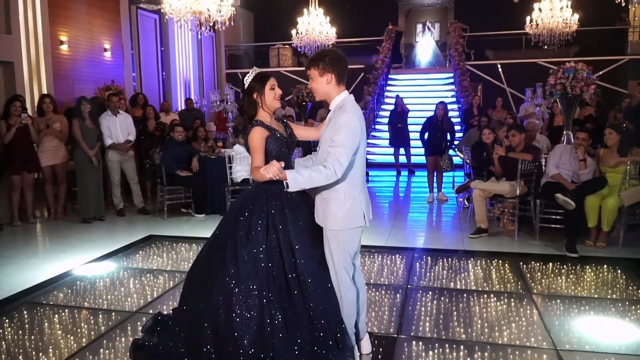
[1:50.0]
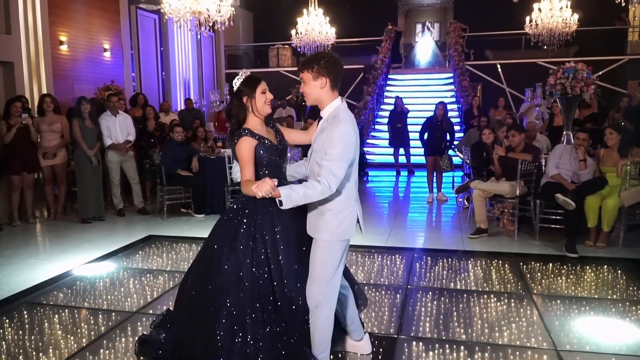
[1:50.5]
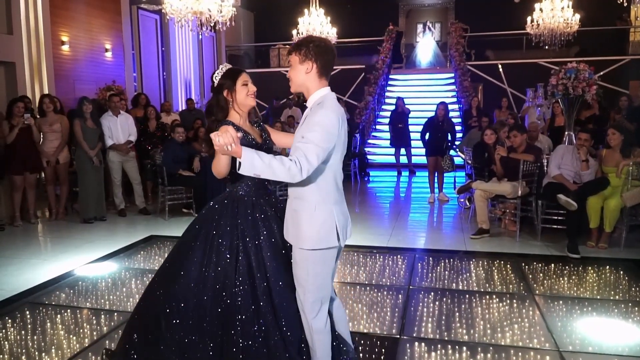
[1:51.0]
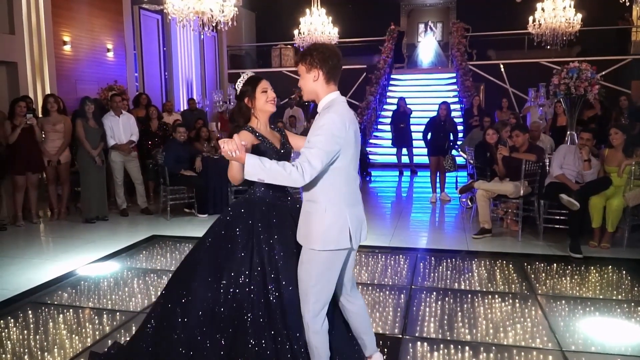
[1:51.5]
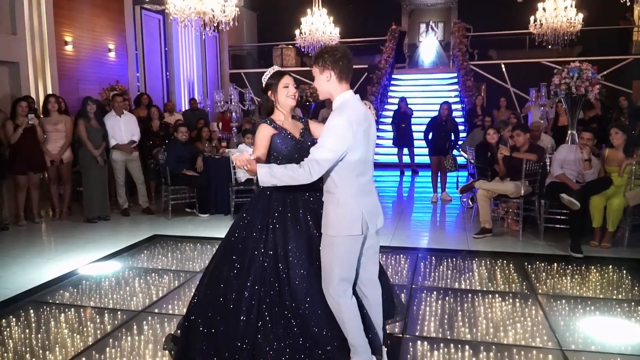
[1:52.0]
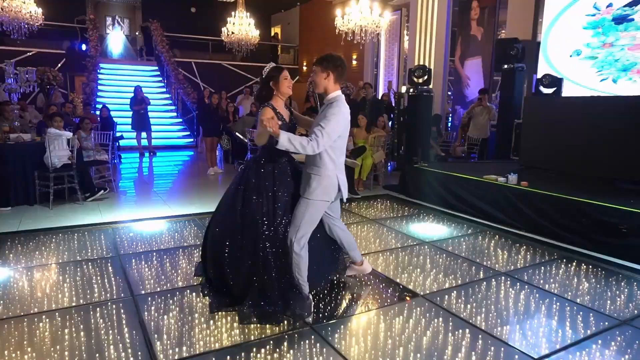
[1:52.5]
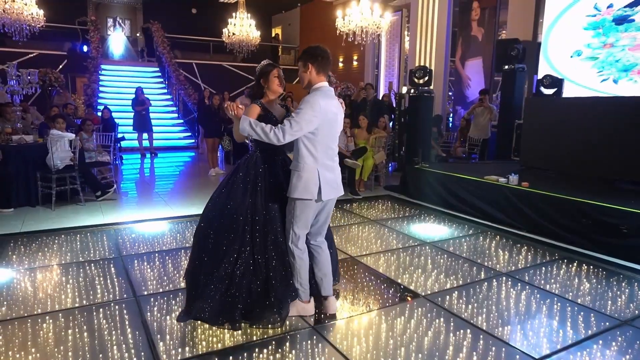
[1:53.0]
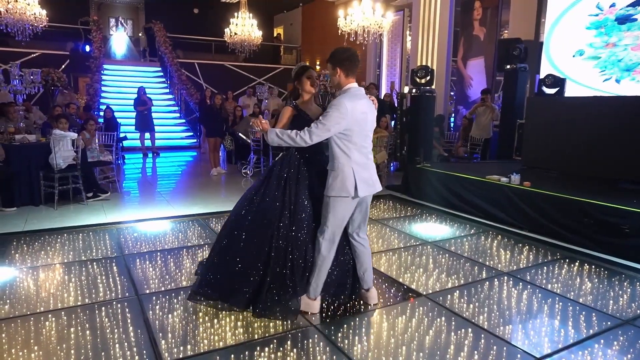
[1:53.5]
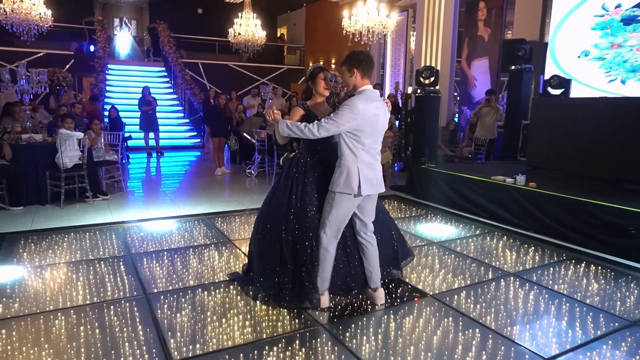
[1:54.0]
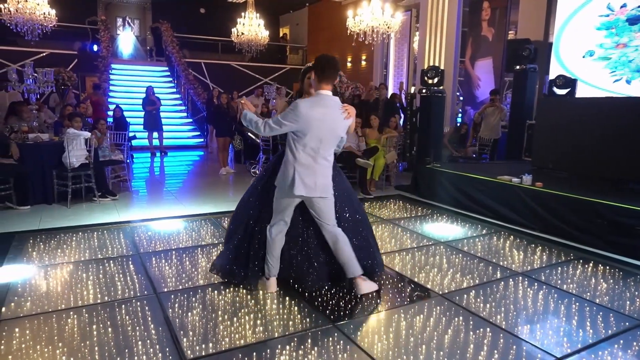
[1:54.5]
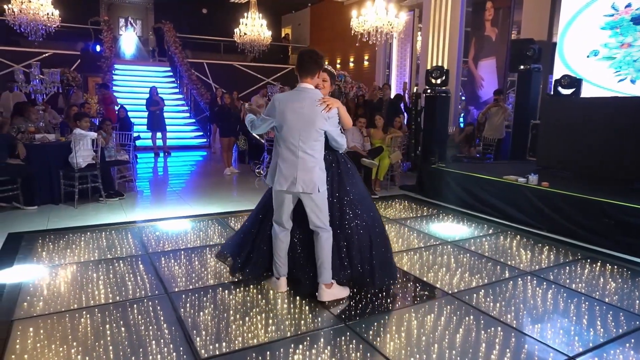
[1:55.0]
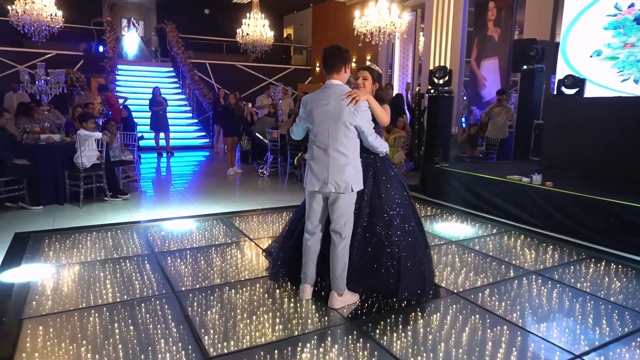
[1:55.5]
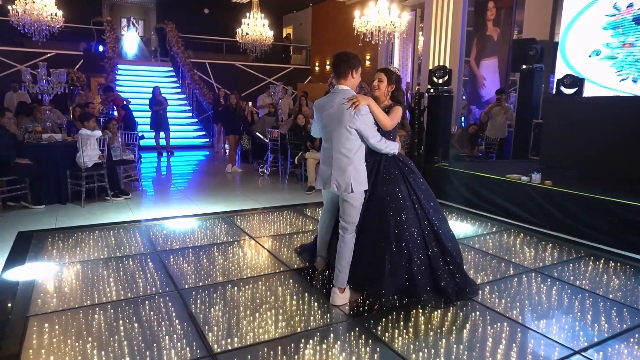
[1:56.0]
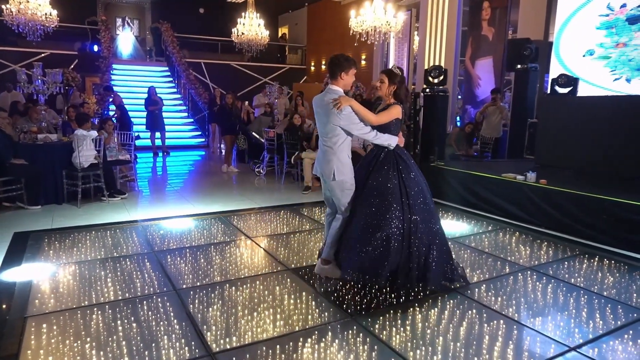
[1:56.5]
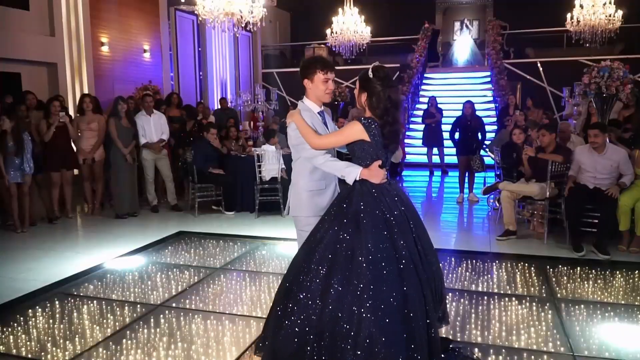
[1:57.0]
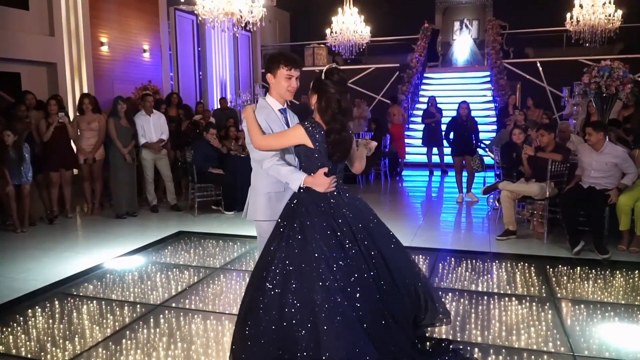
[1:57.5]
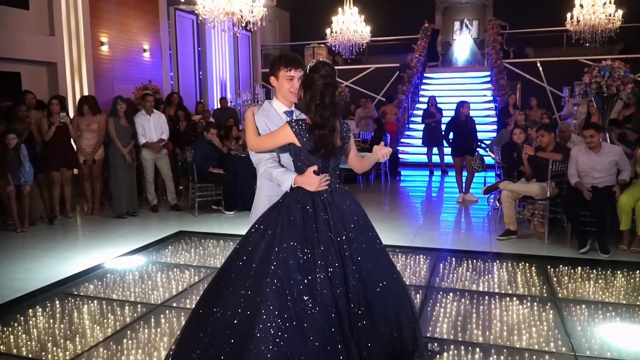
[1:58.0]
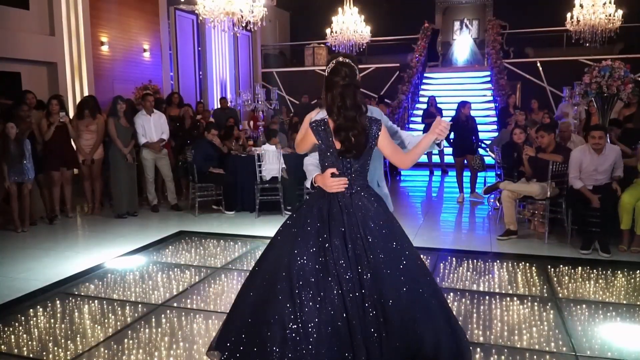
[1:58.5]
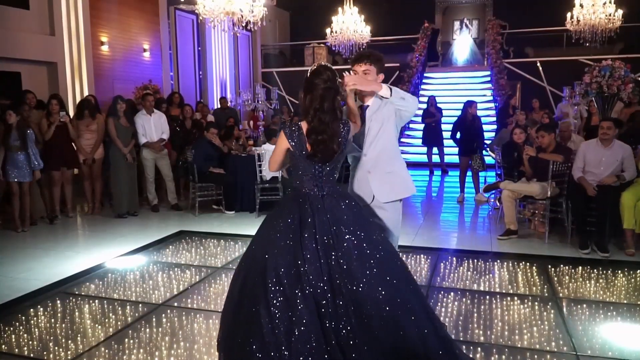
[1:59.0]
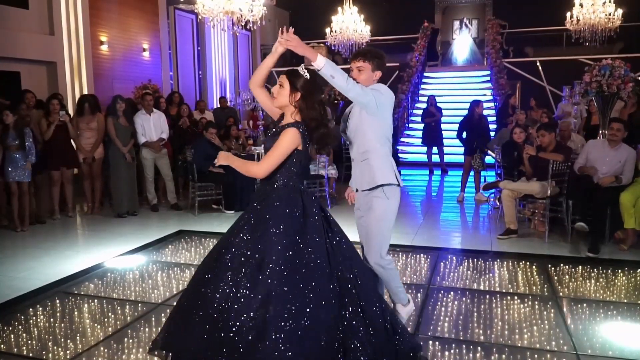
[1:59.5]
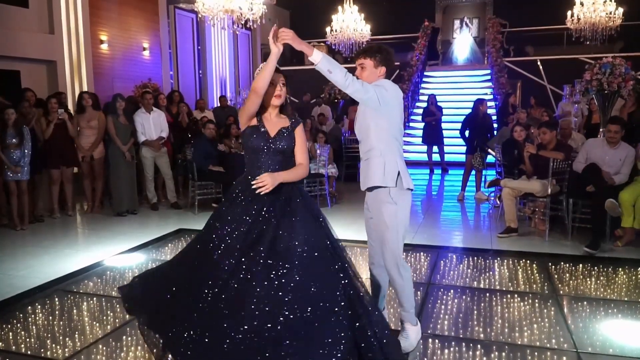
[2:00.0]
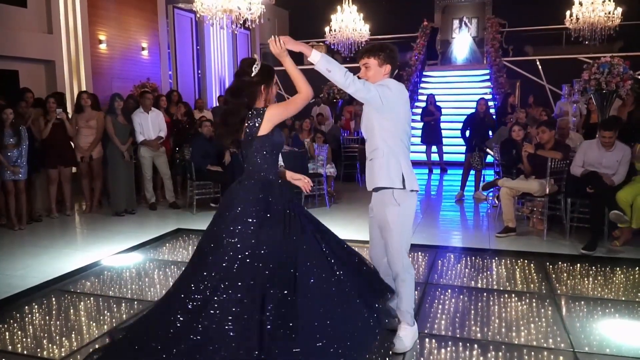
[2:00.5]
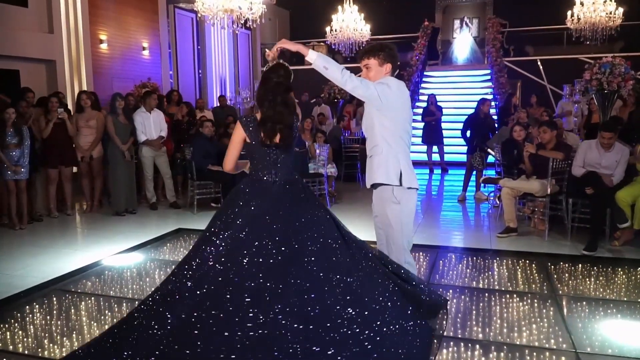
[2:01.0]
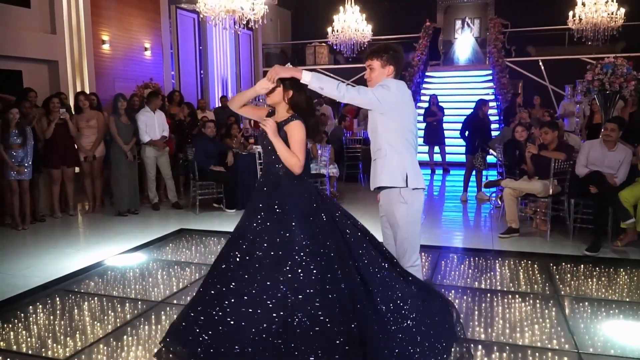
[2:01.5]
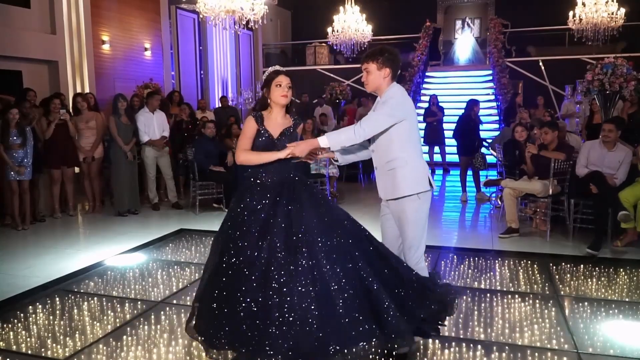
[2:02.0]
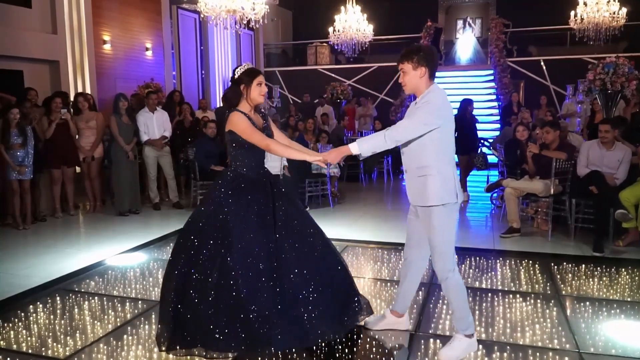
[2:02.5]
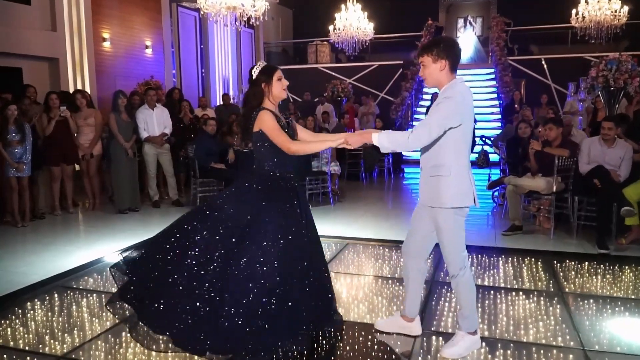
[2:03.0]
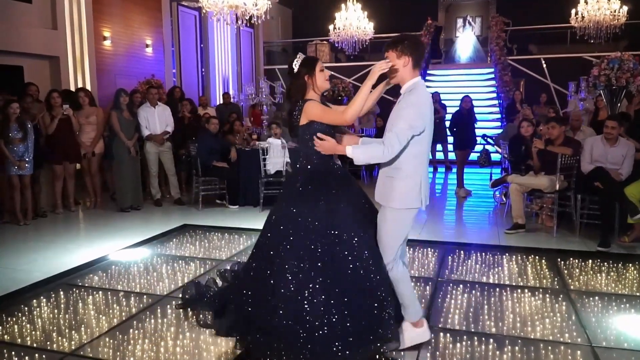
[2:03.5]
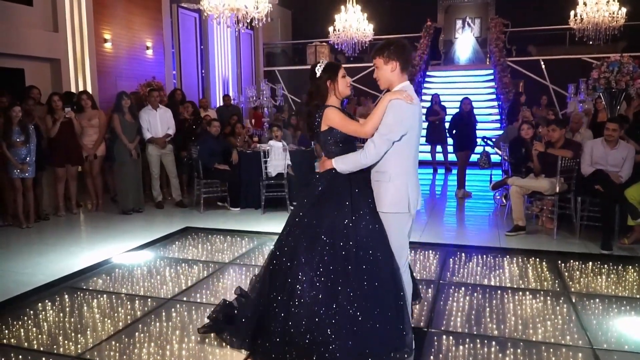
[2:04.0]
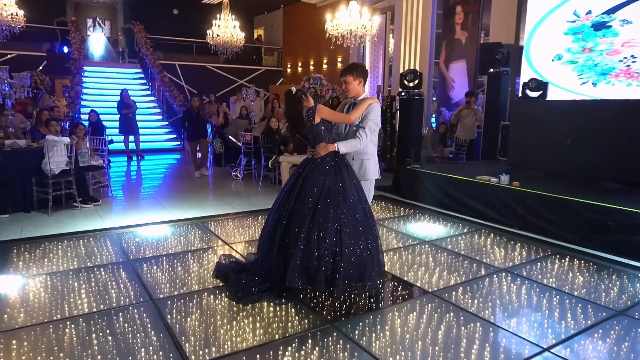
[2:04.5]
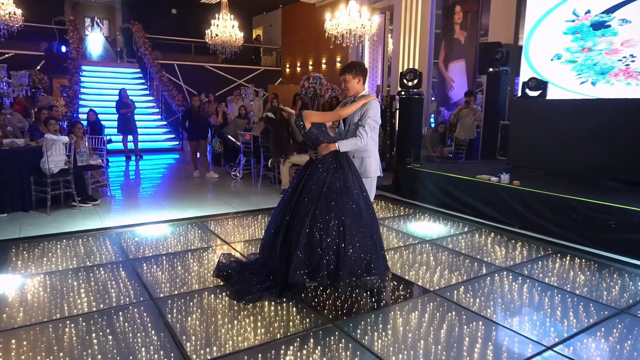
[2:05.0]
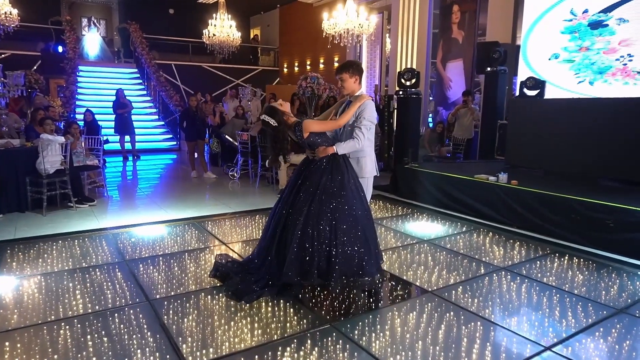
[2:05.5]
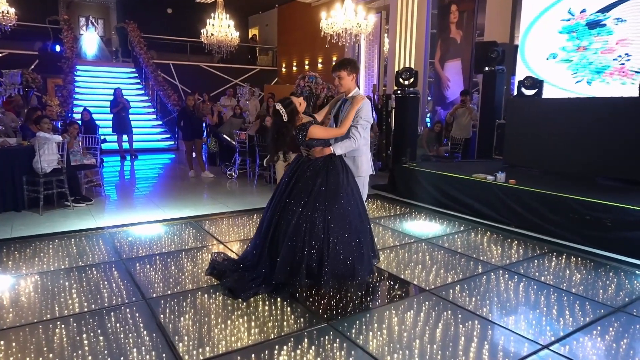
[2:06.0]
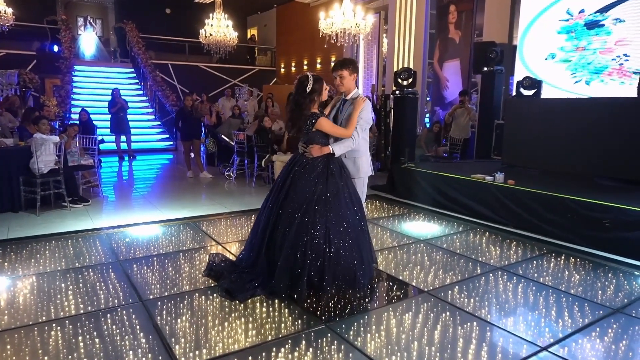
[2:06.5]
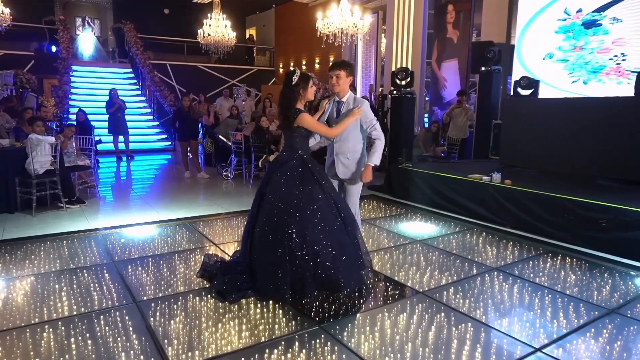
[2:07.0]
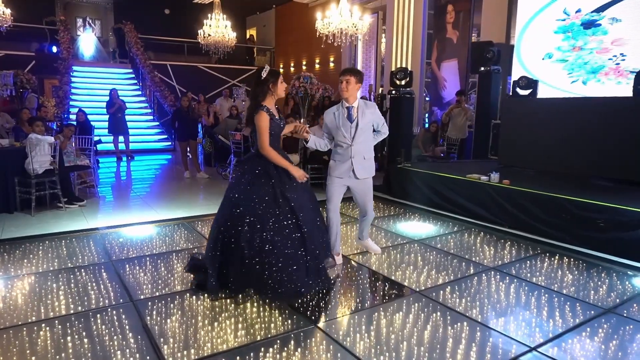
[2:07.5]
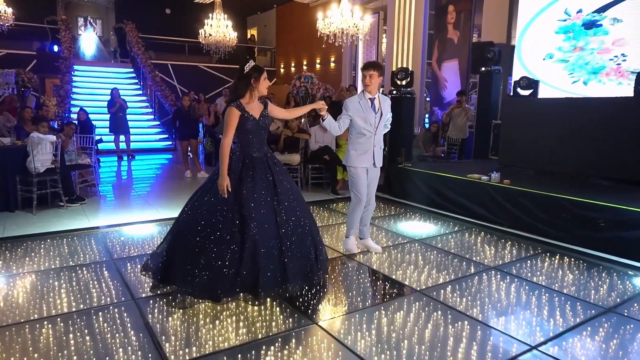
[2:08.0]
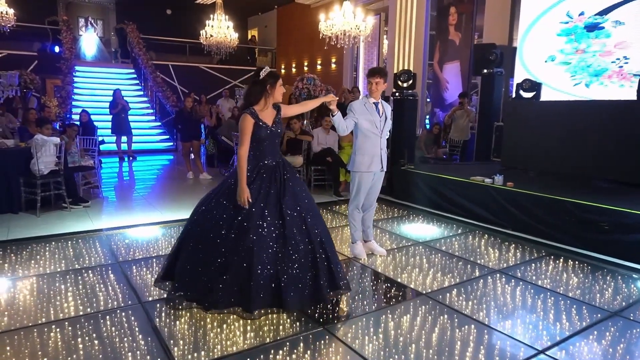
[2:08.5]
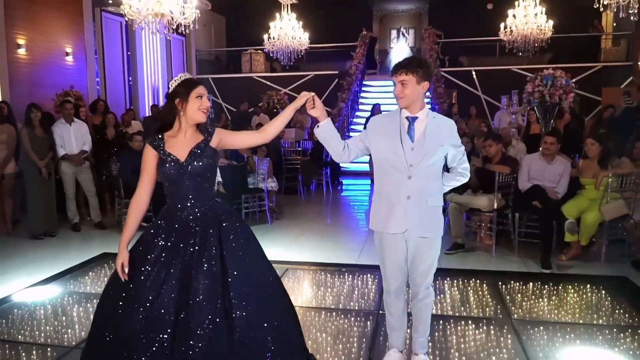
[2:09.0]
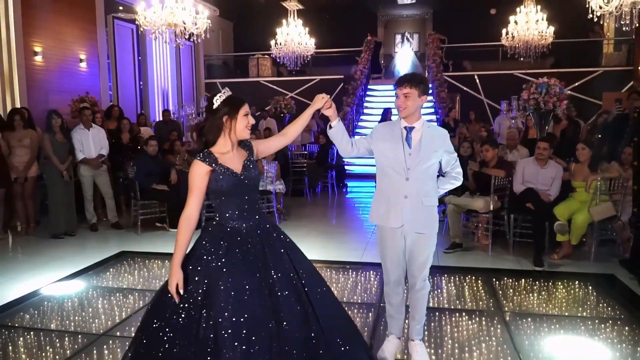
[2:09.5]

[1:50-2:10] The couple continues the dance routine on the stage, which is lit from underneath and built into the floor. They move through the routines slowly and methodically; they look like they have most likely practiced beforehand but do not look like professional dancers. The small ballroom has many people around the sides of the stage, some sitting and some standing, probably a close-knit group of family and friends. Chandeliers hang from the ceiling, and a lighted staircase at the back of the room goes up to another level.